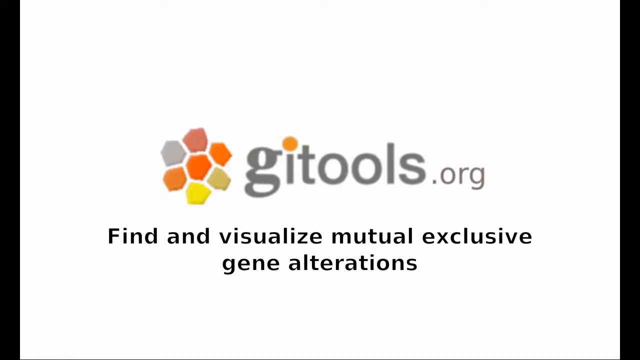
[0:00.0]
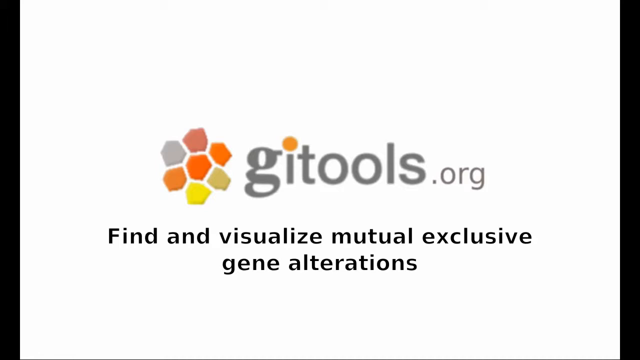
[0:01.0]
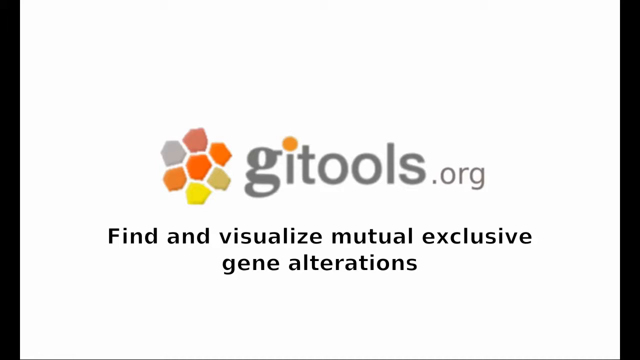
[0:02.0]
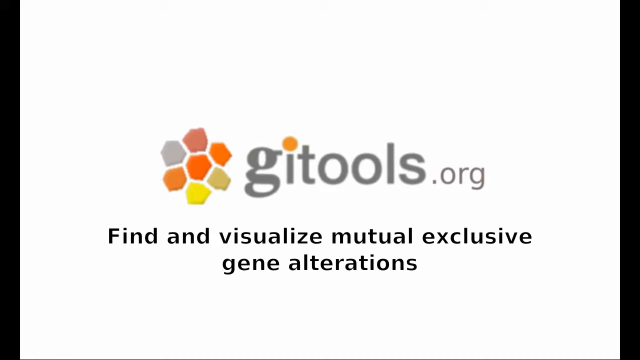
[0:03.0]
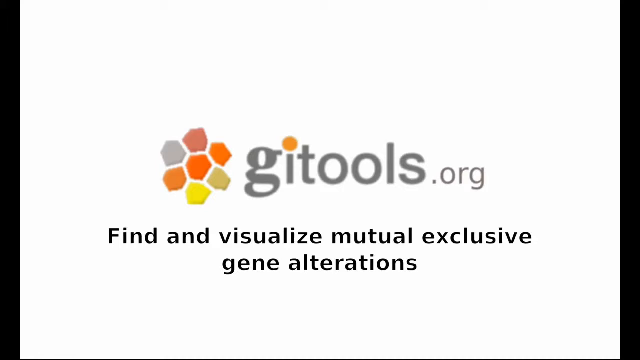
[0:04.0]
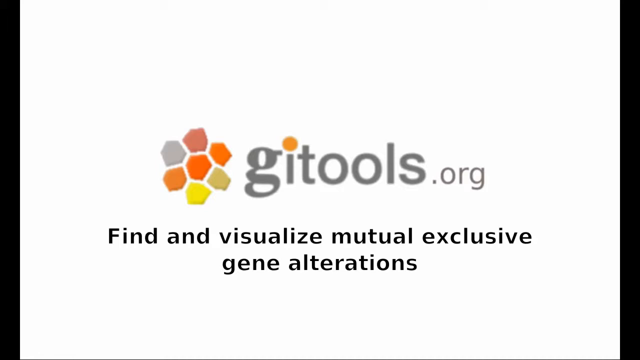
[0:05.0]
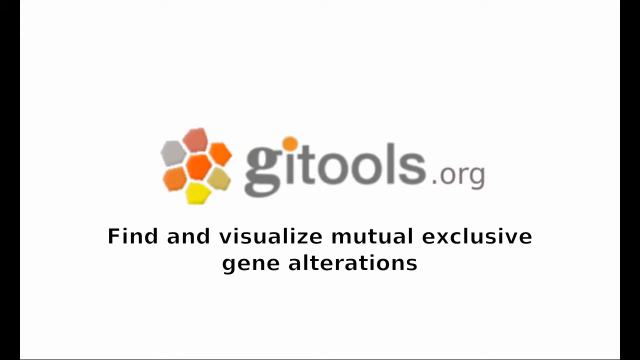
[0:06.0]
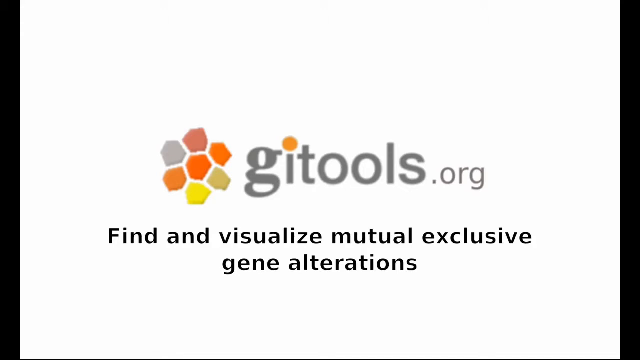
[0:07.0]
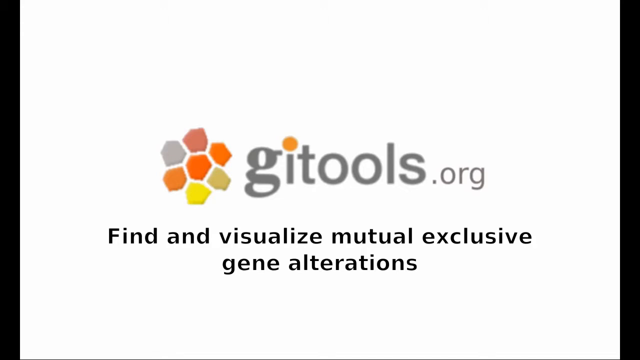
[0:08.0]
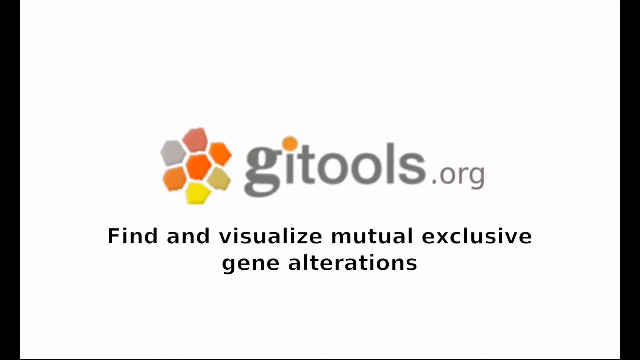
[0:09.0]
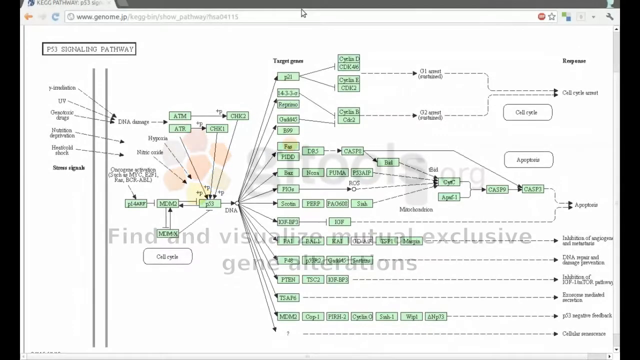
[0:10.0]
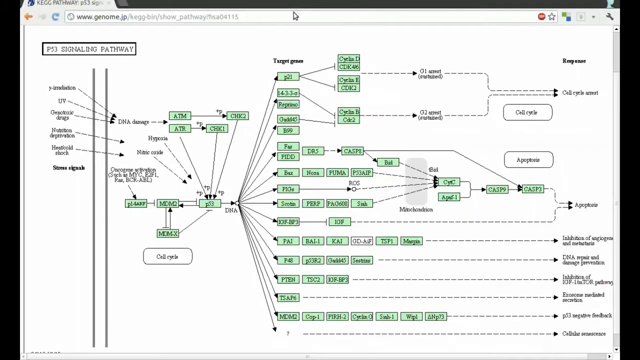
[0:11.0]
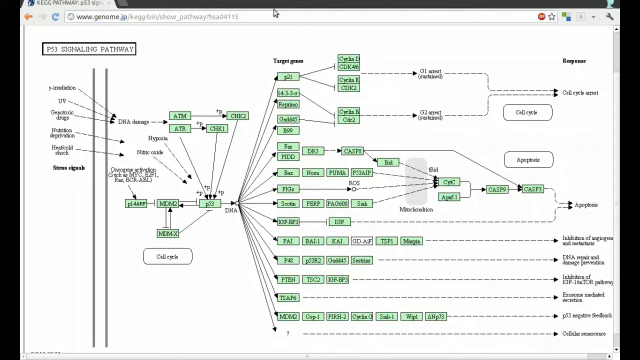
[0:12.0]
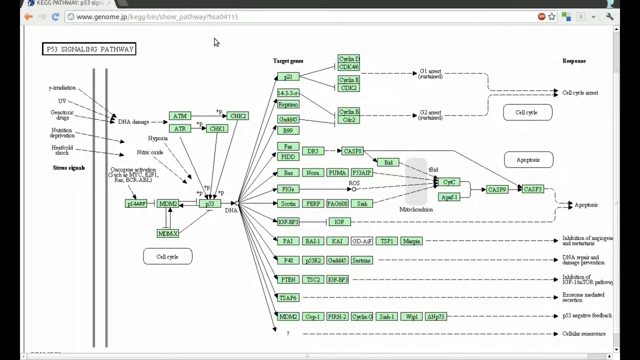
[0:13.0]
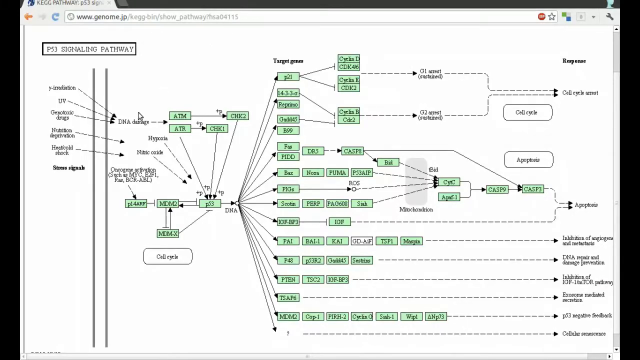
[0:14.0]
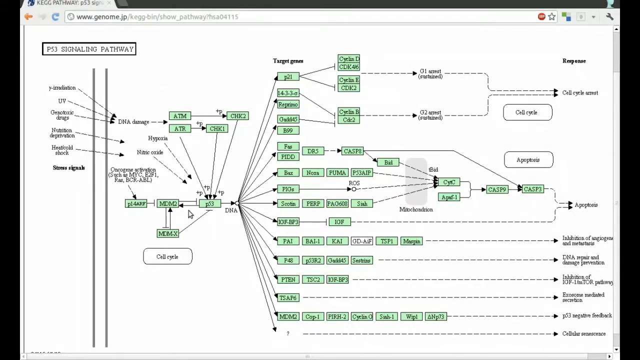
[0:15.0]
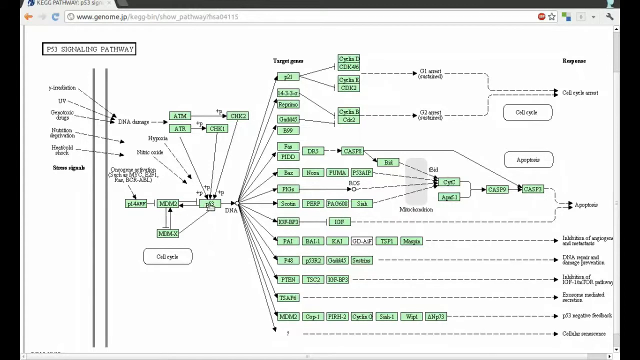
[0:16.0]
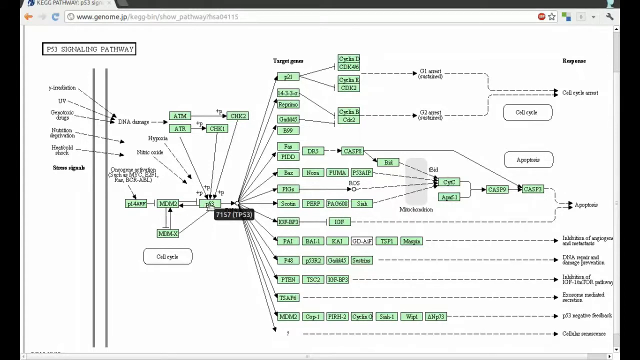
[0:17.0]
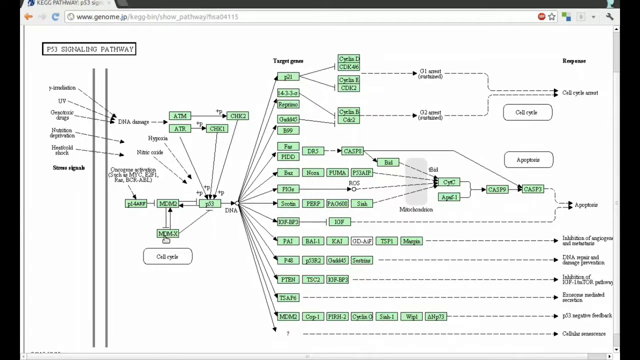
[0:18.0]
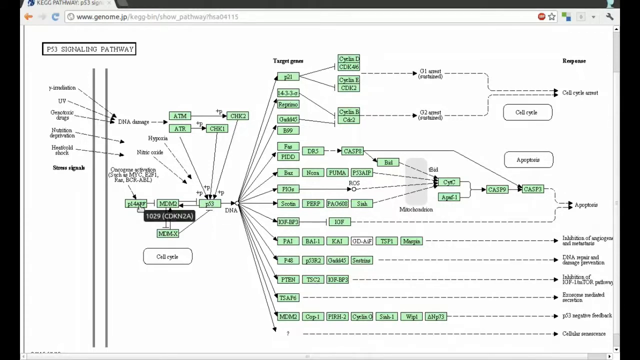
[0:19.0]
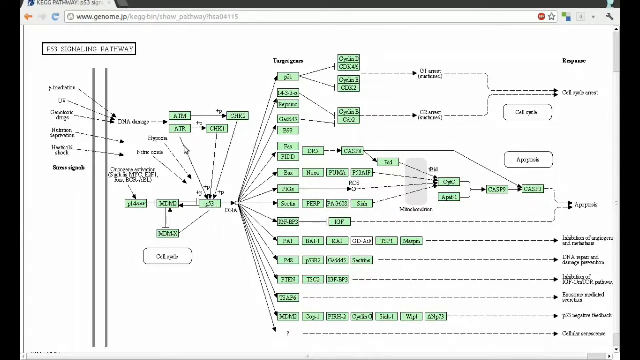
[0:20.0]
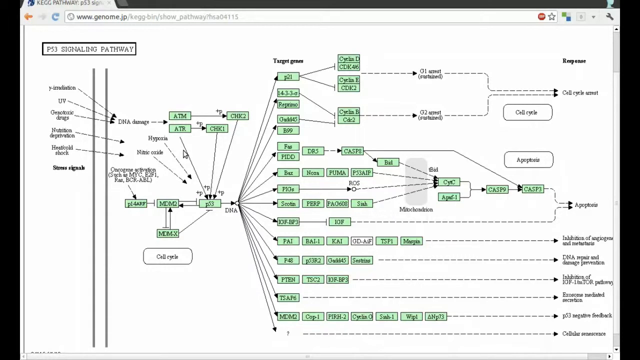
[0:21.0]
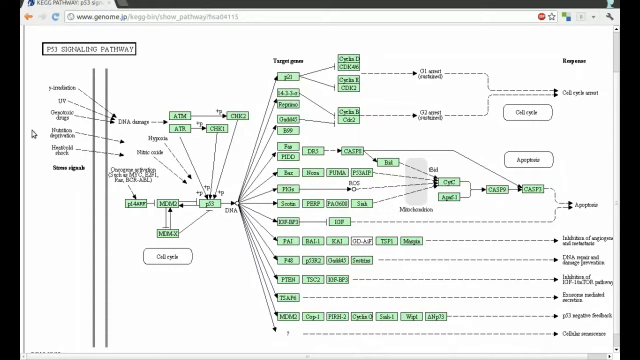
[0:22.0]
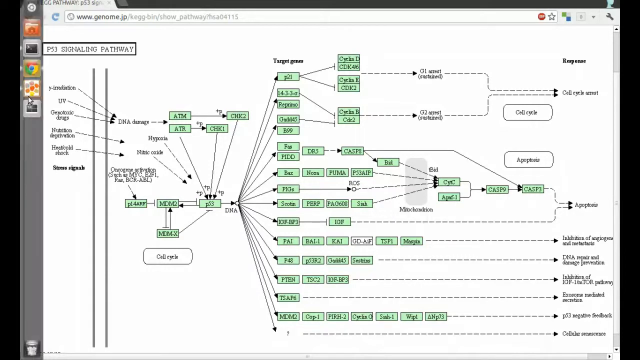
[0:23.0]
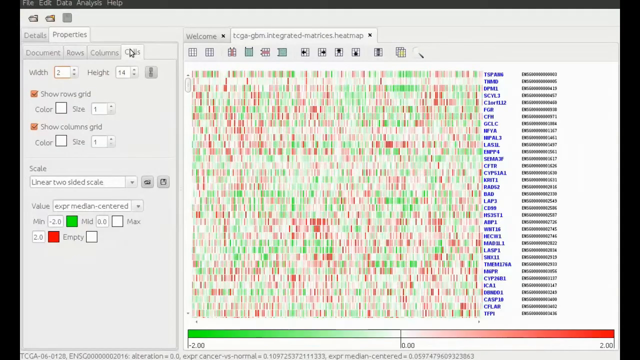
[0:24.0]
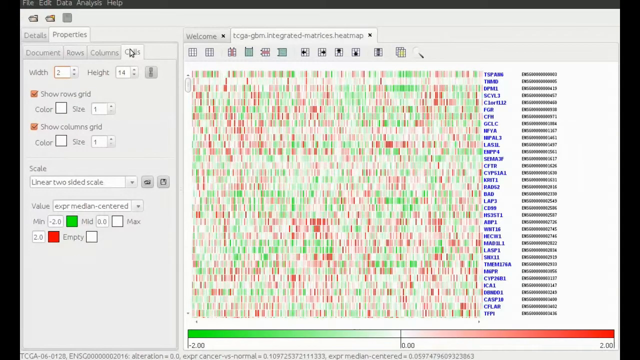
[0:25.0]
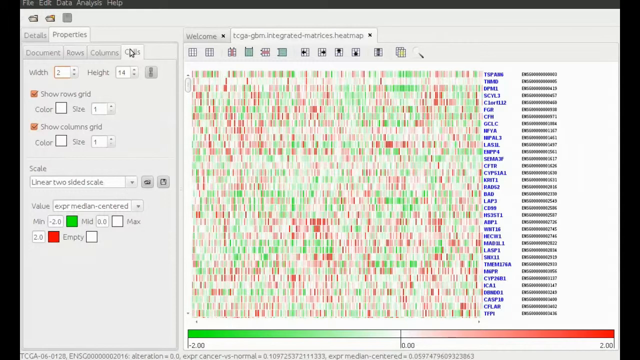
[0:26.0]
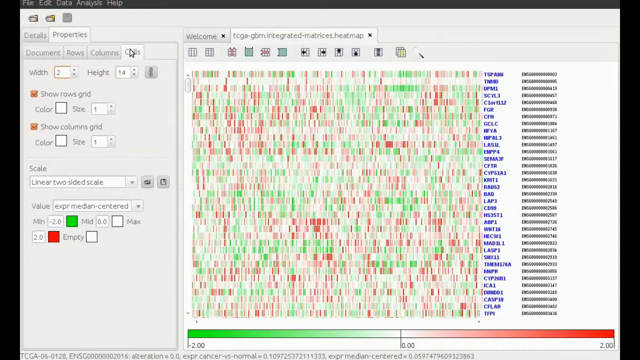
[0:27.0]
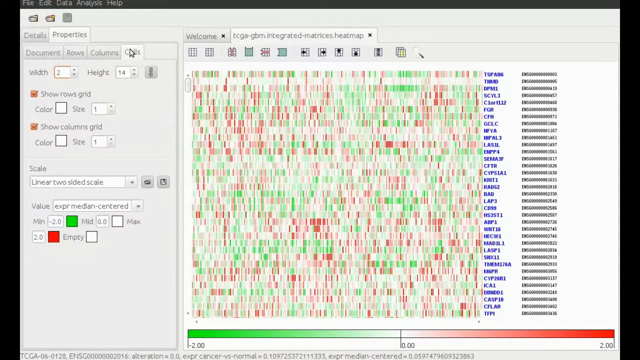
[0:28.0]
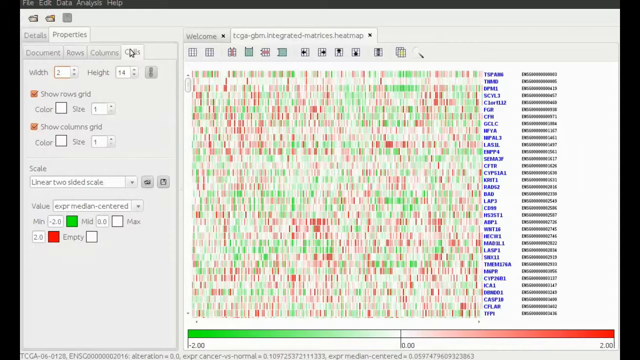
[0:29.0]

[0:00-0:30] The video begins with the GiTools logo and the website gitools.org, along with a line about finding and visualizing mutual exclusive gene alterations. A browser then appears, open to www.genome.jp, showing a very large chart with many different labels; at the very top it says "P53 signaling pathway". The user hovers over the P53 box on the middle left of the screen, and a black box kind of pops up that says "7157 (TP53)". They then hover over the MDM2 box, which brings up a black box that says "4193 (MDM2)", then over the MDMX box, where a black box pops up that says "4194 (MDM4)", and then over the P14ARF box, where a black box pops up that says "1029 (CDKN2A)". The user then takes the mouse to the left margin of the screen, where a menu pops up, and clicks the fourth icon, which looks like a flower and is the GiTools logo. Another window pops up with two tabs on the right and a few property settings on the left.